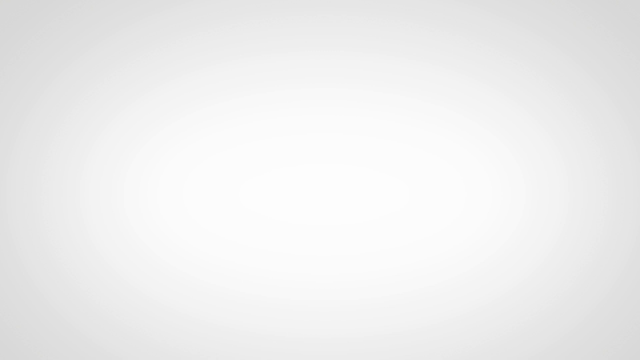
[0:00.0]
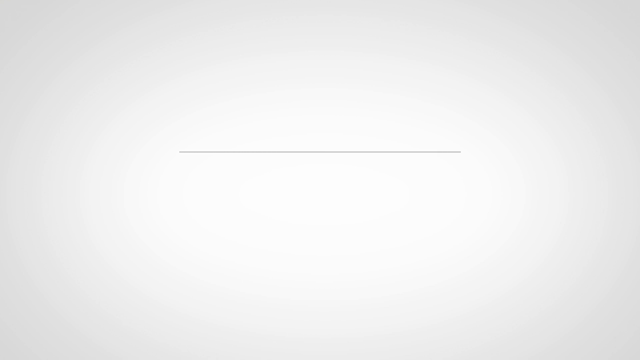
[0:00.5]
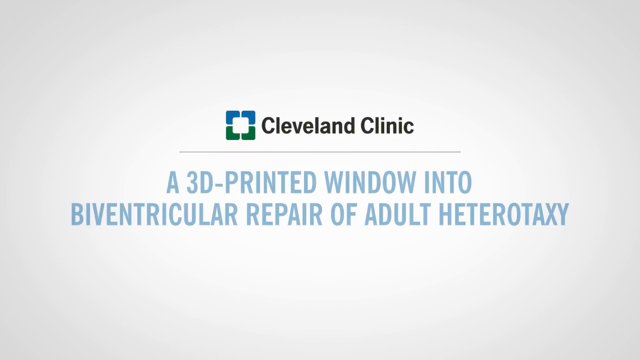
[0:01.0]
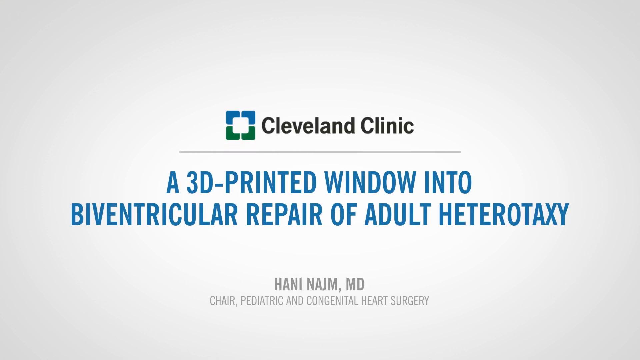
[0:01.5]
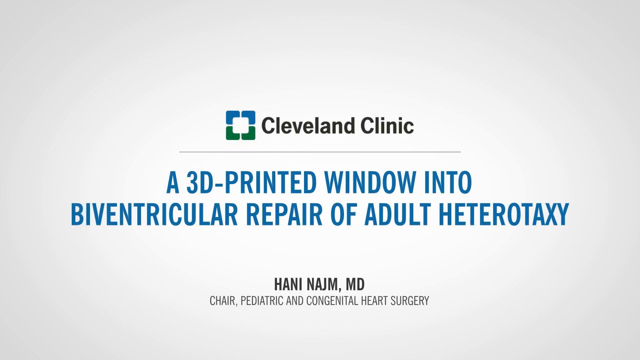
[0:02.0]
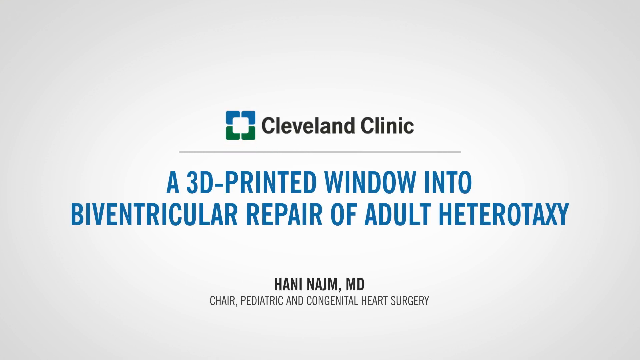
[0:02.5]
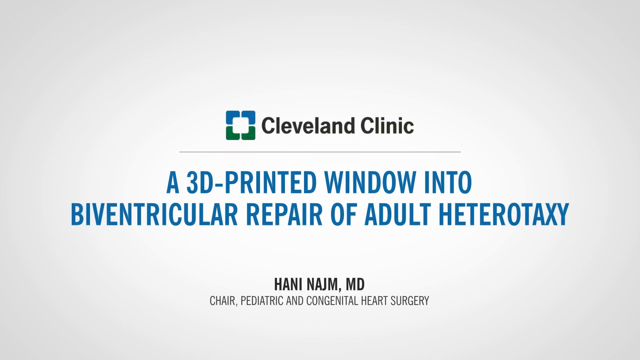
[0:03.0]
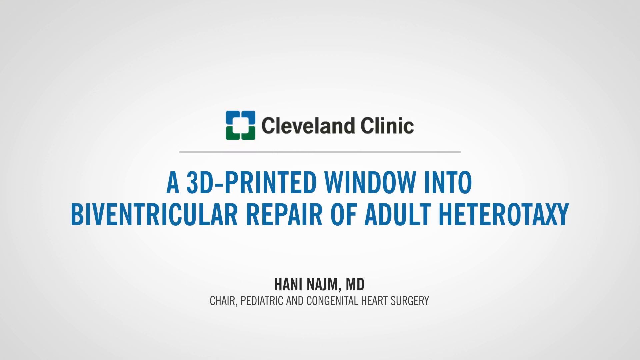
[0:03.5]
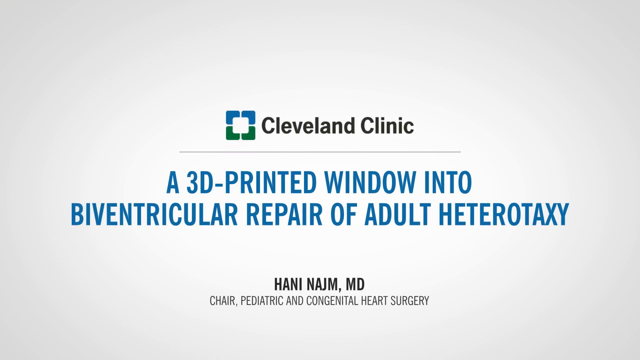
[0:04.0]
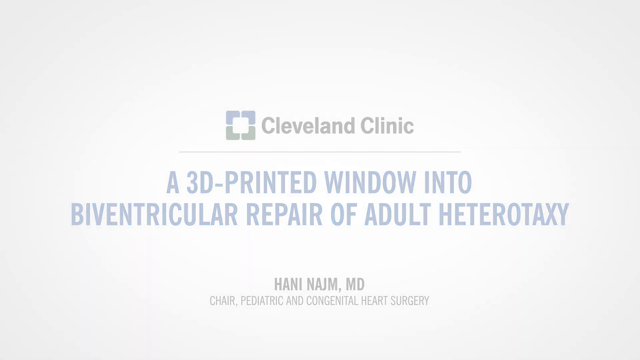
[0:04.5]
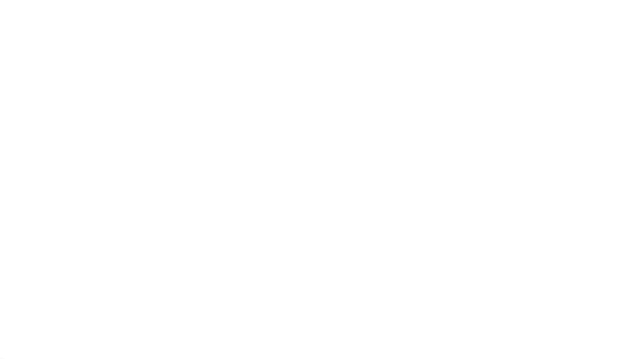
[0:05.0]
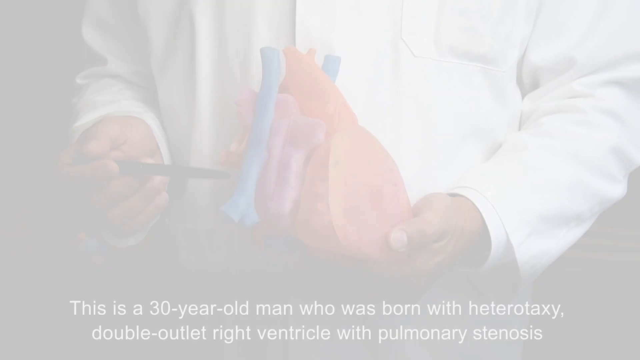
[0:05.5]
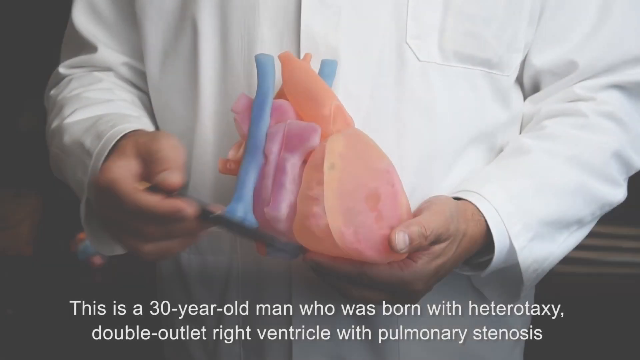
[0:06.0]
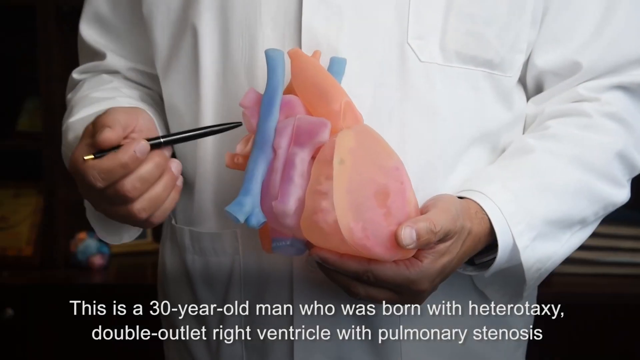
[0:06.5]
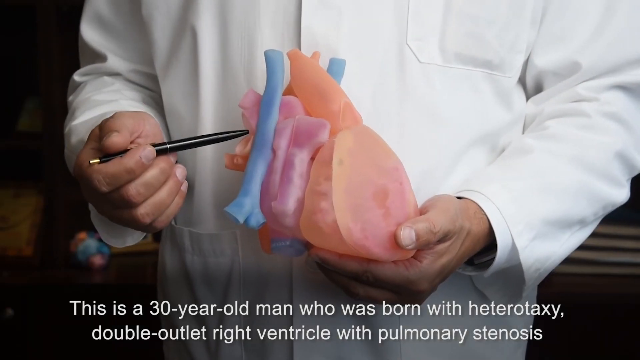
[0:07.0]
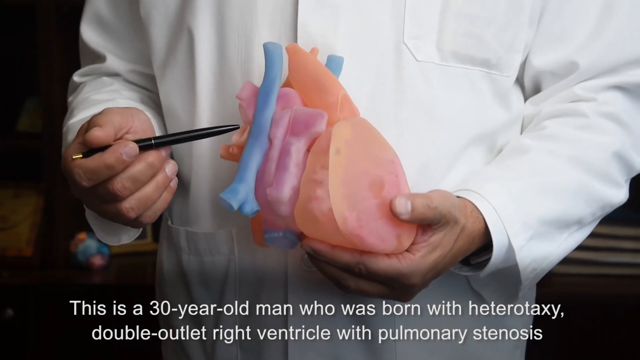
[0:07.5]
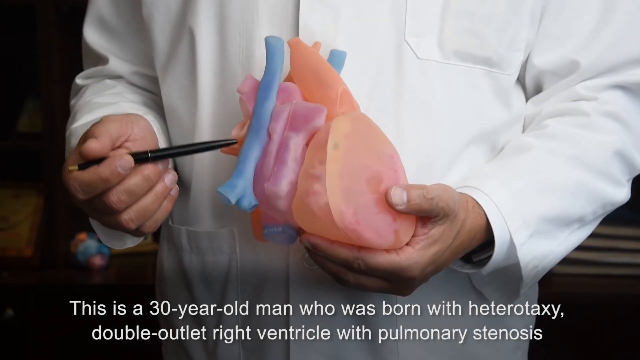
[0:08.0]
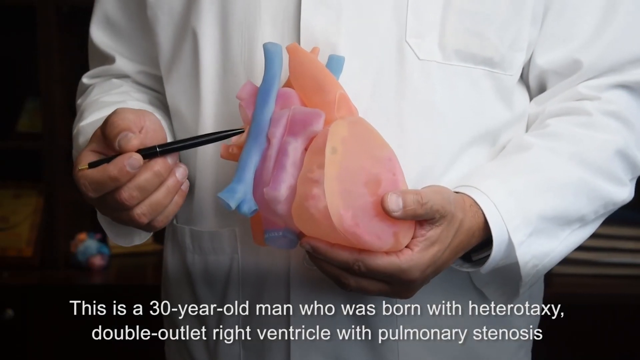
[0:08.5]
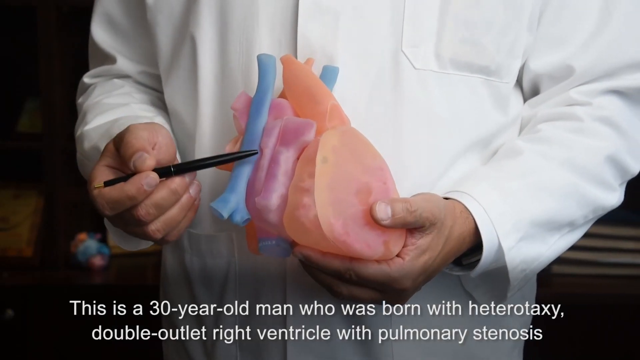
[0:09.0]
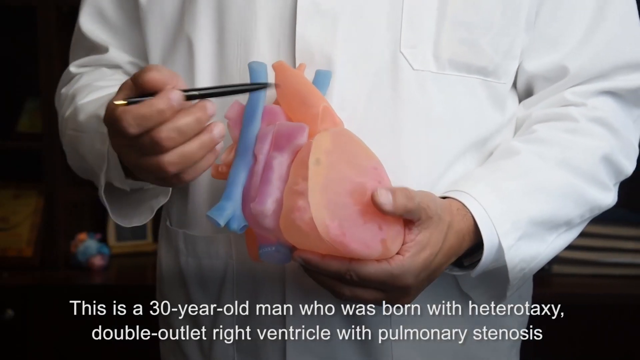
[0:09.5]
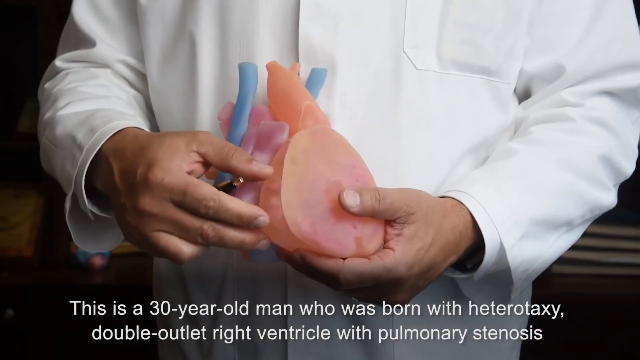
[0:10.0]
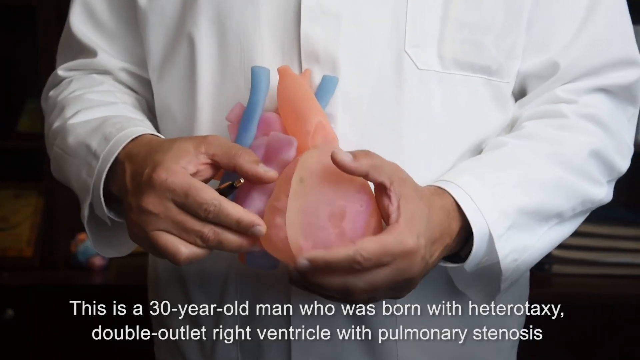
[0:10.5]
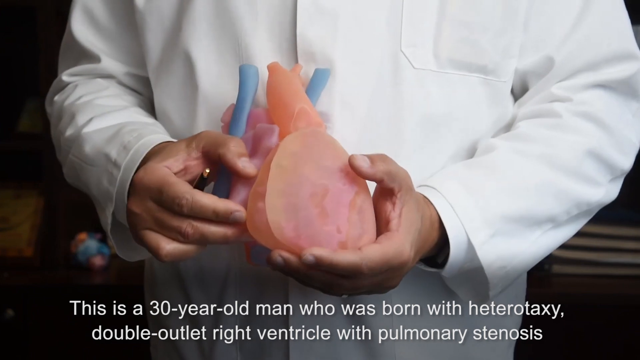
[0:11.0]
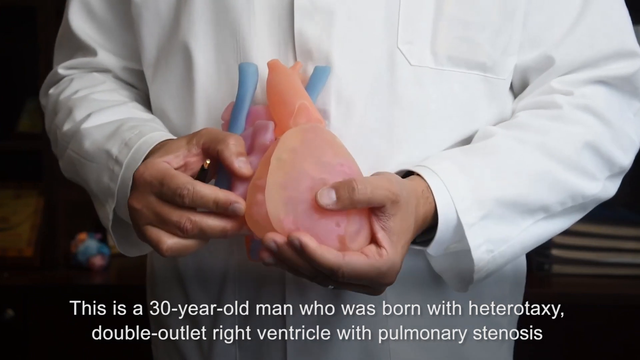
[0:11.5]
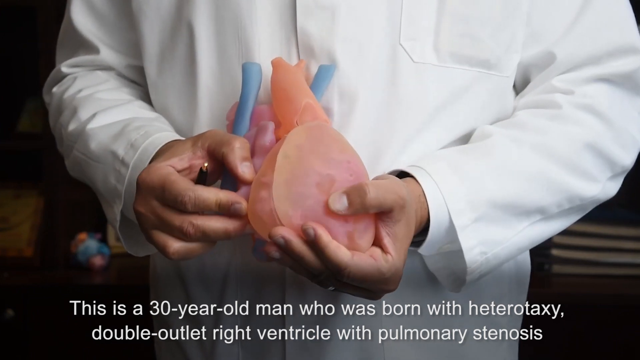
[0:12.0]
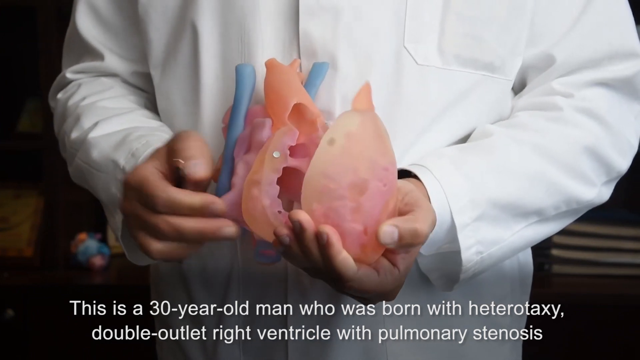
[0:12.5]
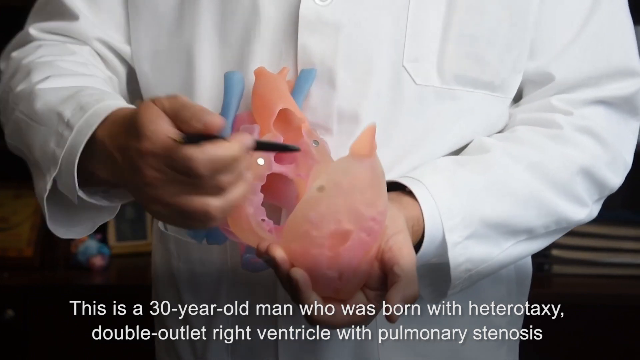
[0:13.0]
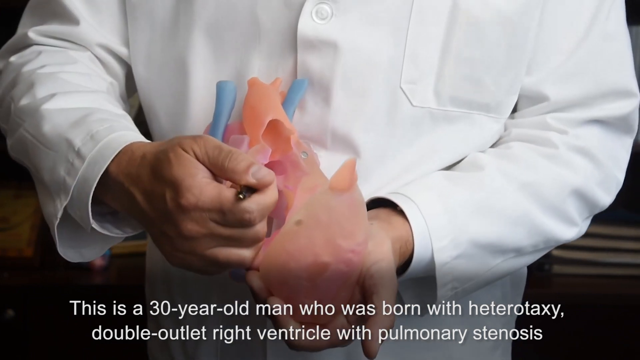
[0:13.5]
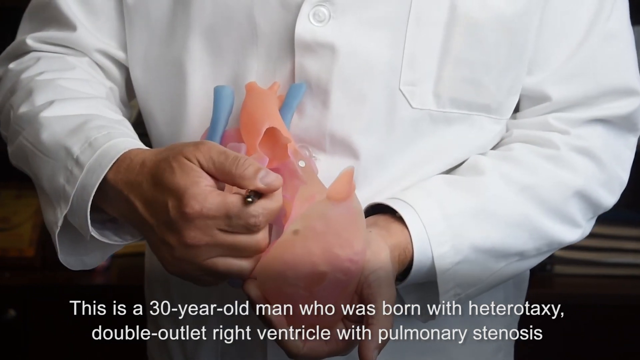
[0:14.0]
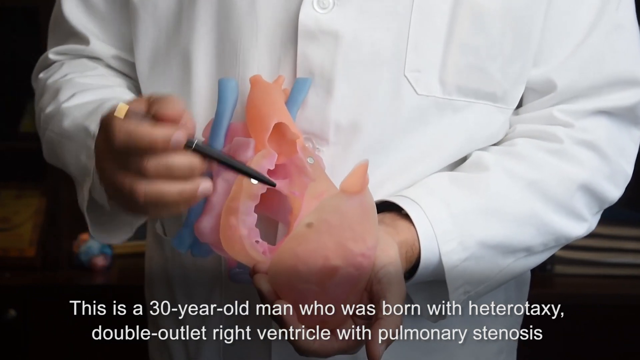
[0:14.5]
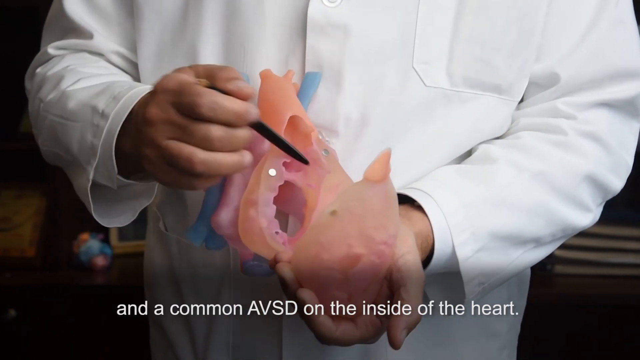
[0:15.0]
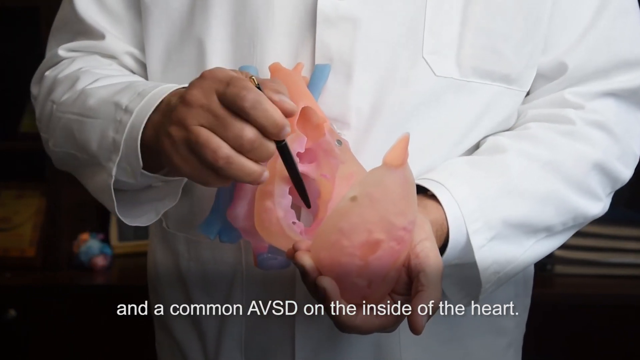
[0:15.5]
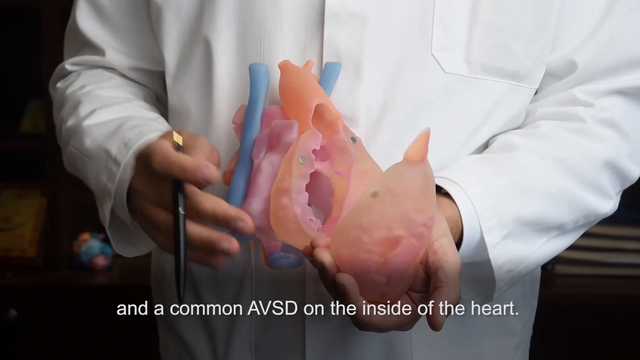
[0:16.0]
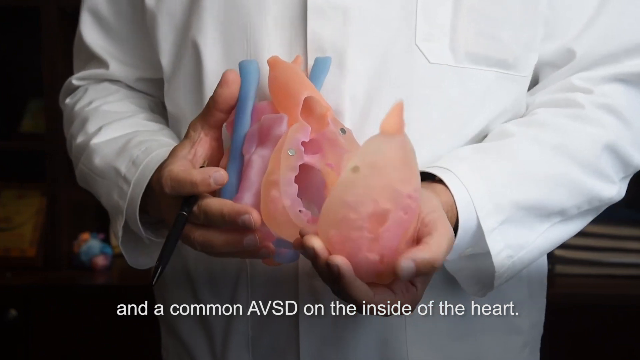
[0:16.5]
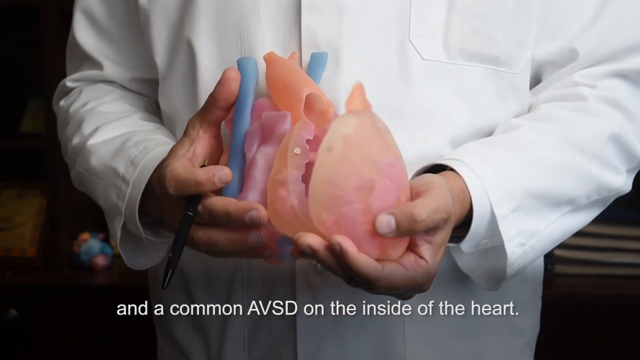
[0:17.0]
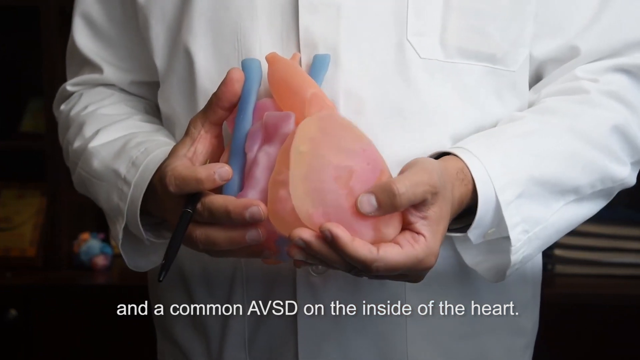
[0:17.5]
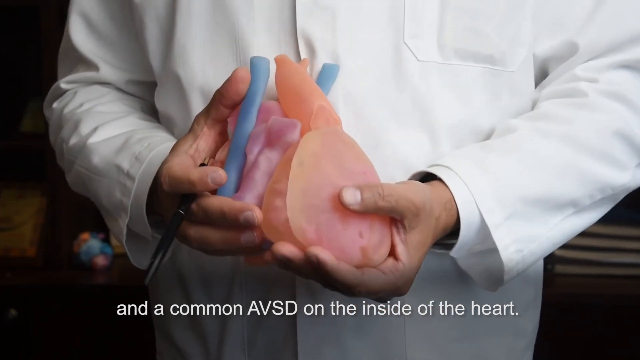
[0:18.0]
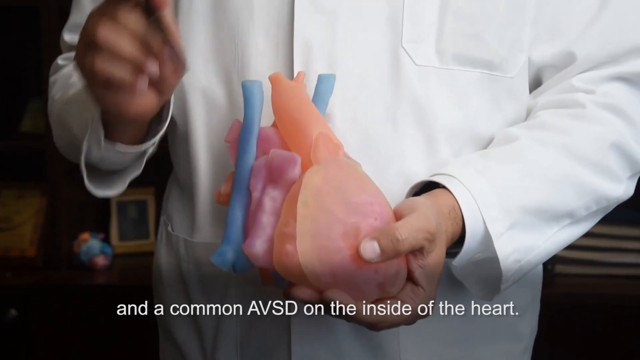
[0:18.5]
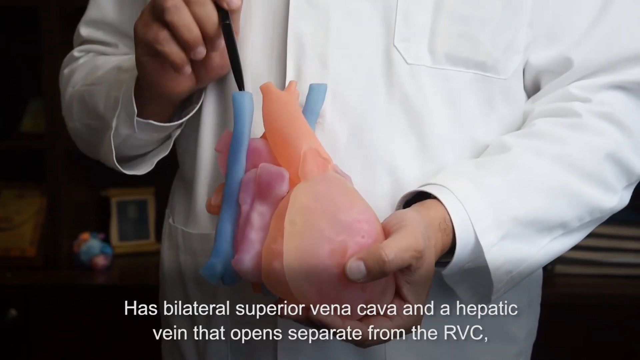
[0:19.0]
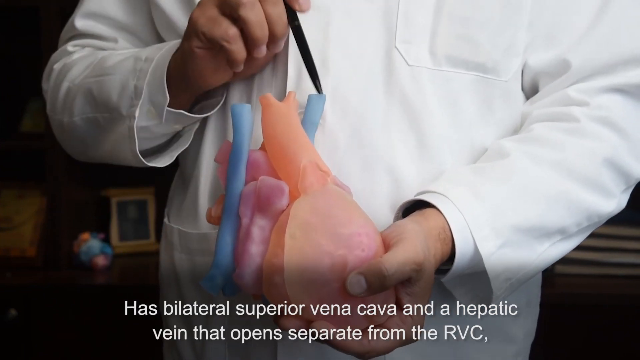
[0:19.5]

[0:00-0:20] The video concerns a 3D printed window into adult heterotaxy and is associated with the chair of pediatric and congenital heart surgery. It presents the case of a 30-year-old man born with heterotaxy and pulmonary stenosis who has bilateral superior vena cava.